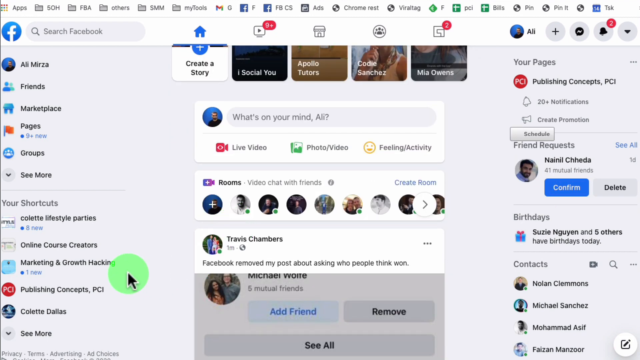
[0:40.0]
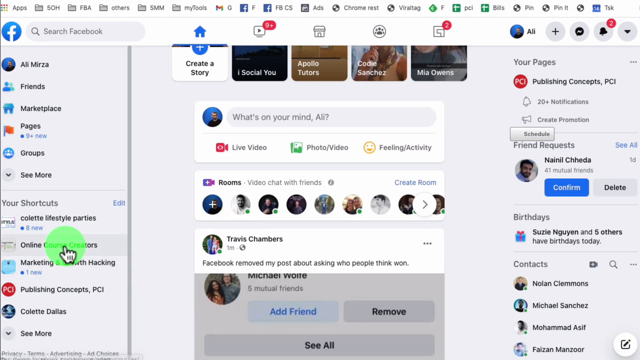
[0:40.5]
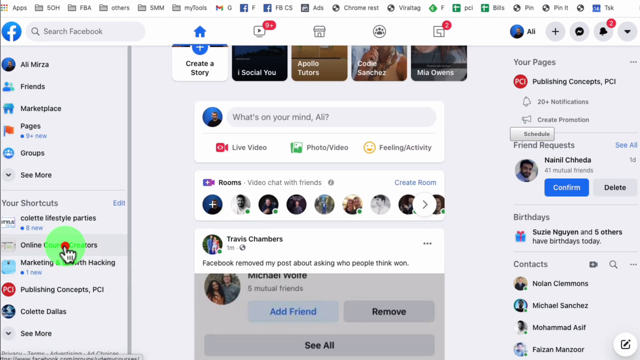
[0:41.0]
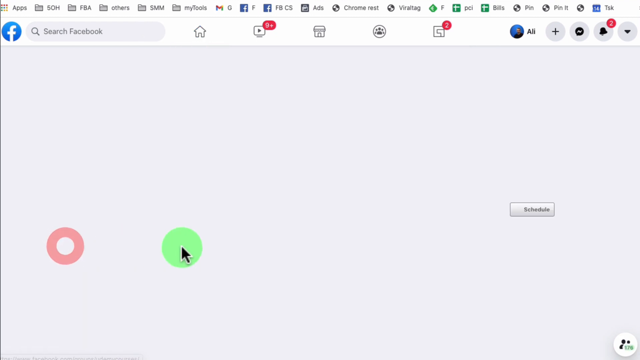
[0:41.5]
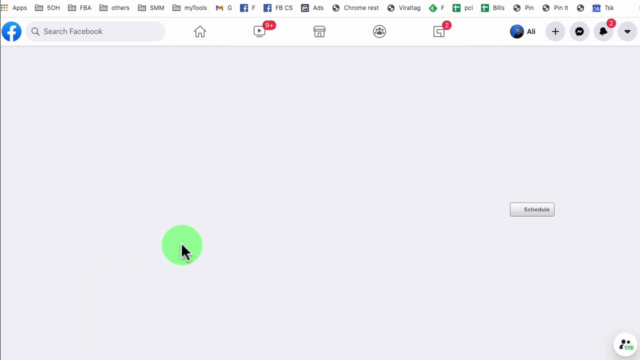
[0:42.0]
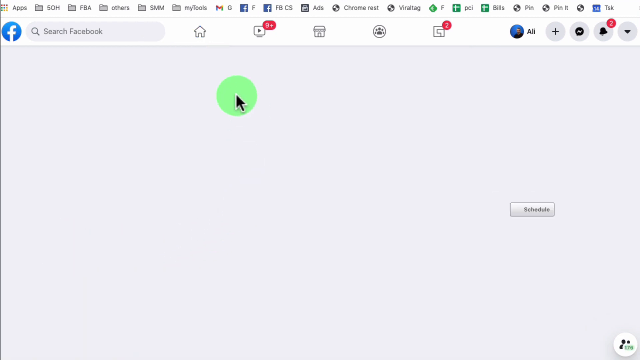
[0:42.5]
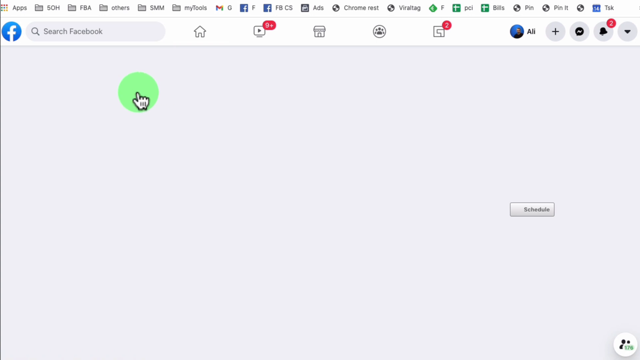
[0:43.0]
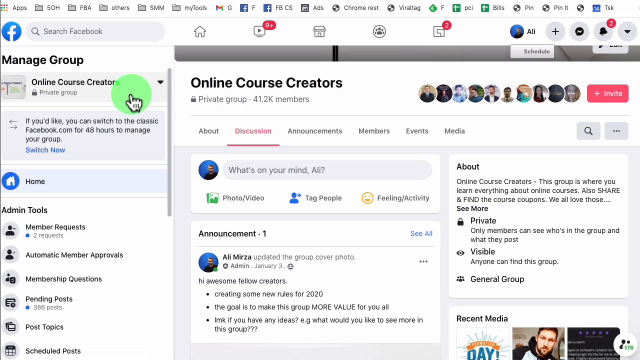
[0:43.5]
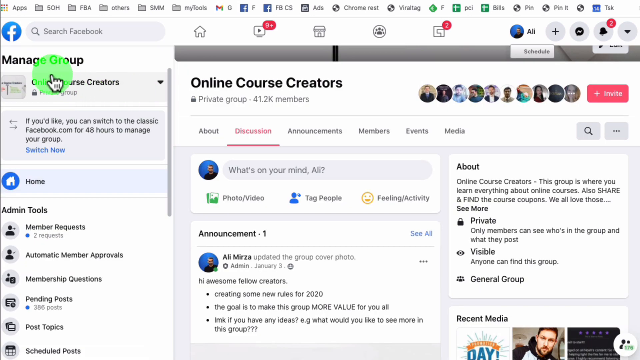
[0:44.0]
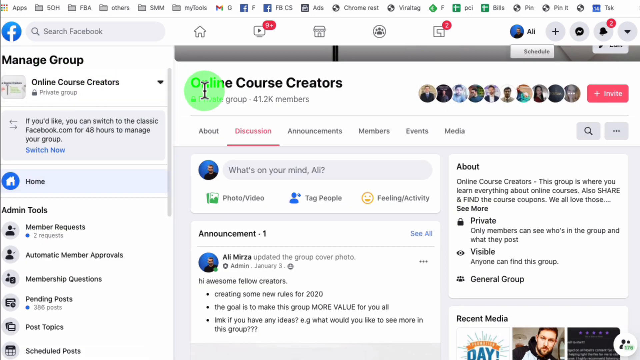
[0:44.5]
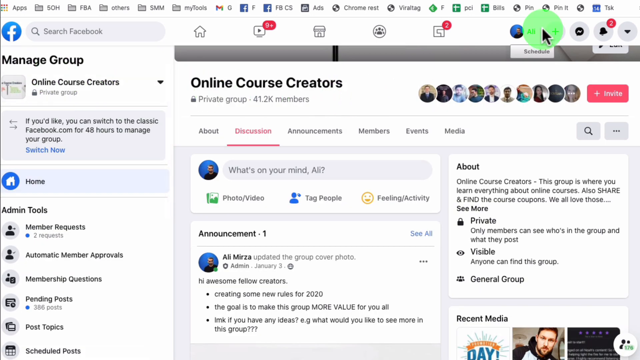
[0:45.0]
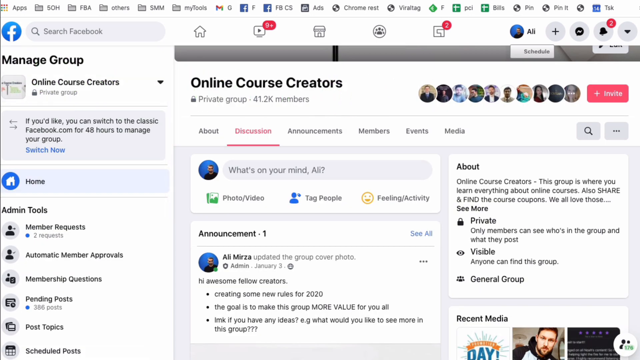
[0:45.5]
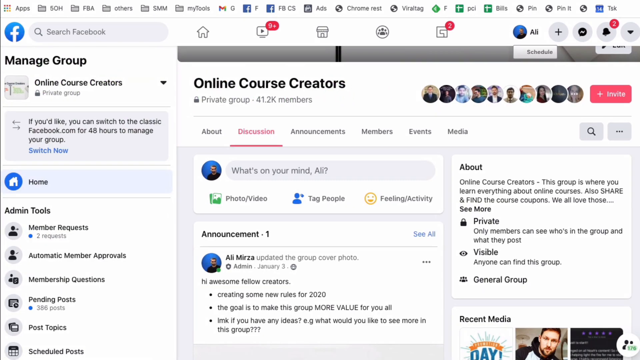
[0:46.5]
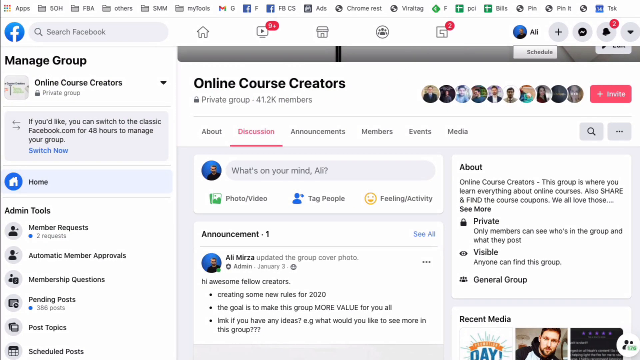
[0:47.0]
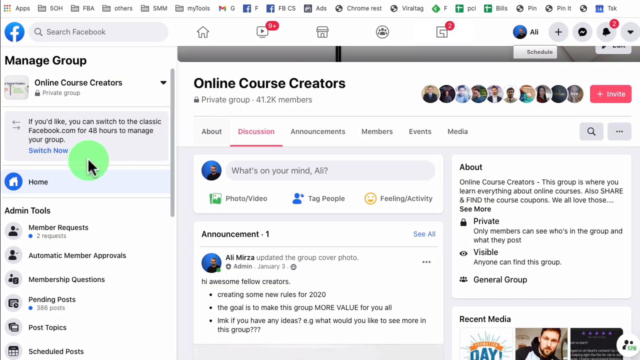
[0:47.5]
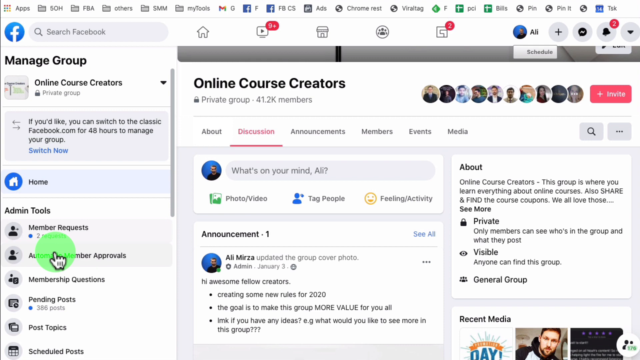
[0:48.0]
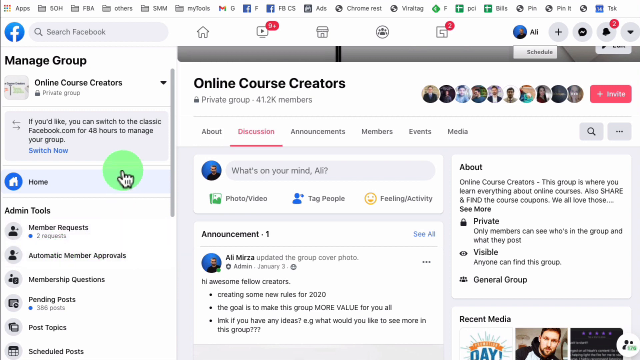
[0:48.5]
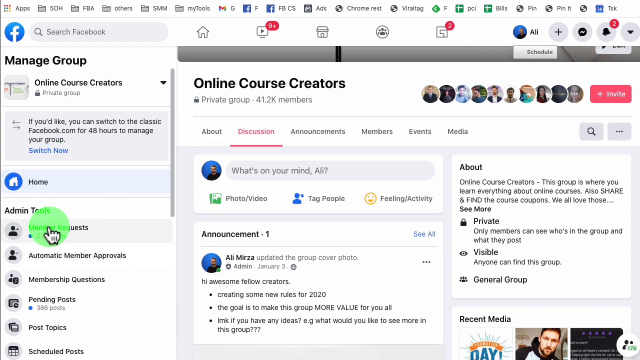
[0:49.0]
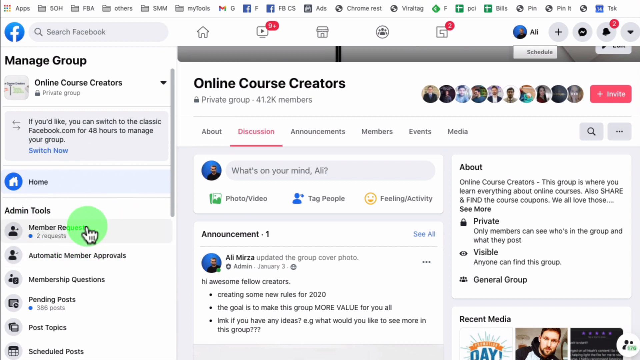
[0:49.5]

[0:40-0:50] Many pop-ups appear on the page, including "online course creators" and "manage the group". The mouse hovers over the left side of the page, where the left panel reads "manage the group". The page has many participants.